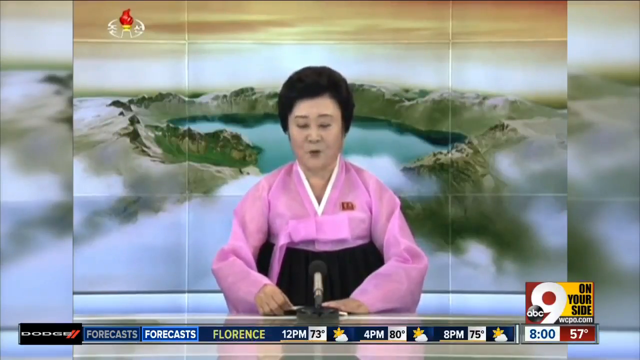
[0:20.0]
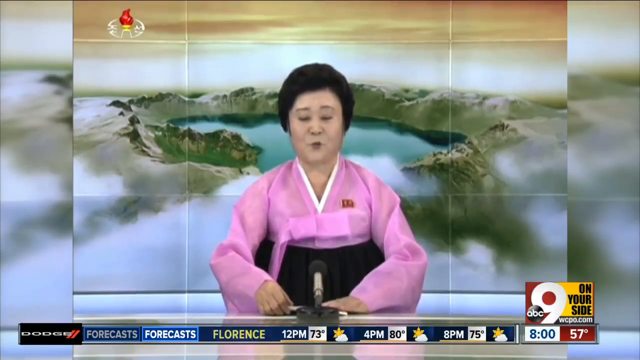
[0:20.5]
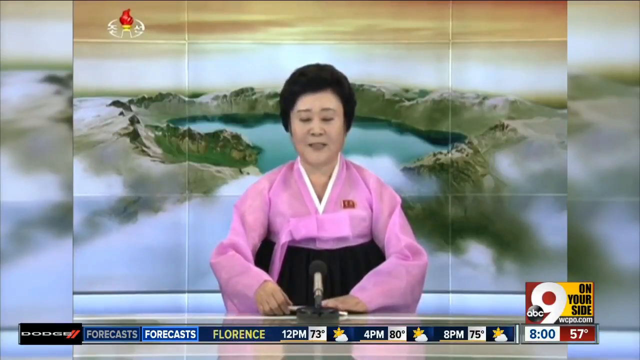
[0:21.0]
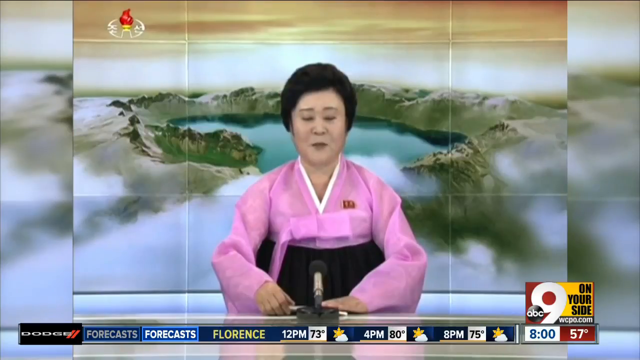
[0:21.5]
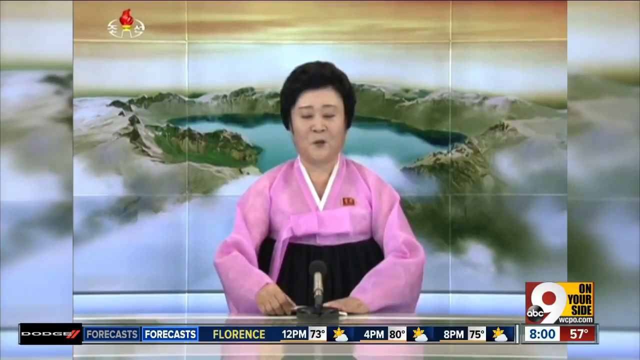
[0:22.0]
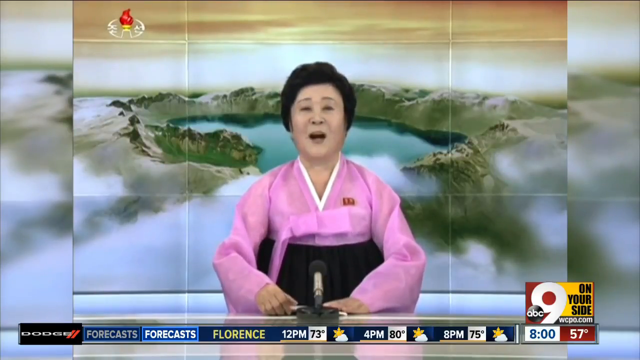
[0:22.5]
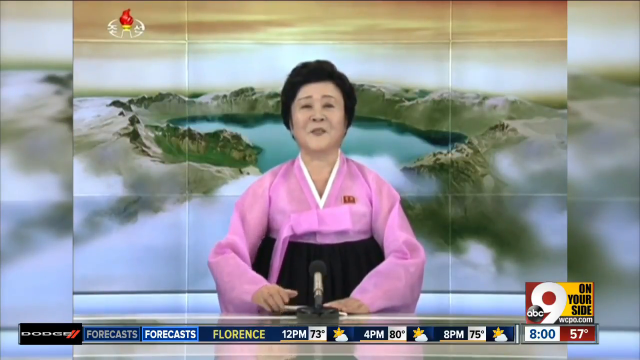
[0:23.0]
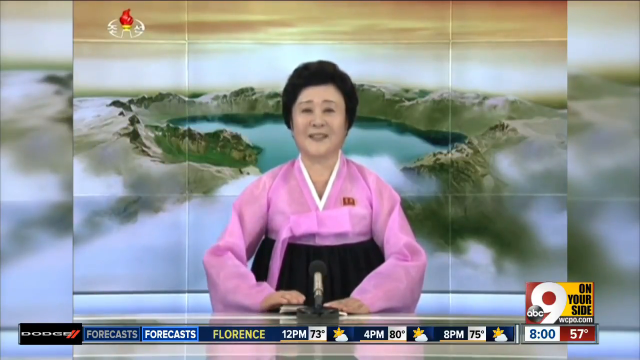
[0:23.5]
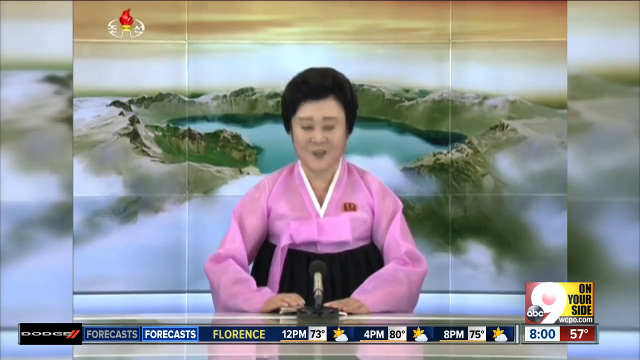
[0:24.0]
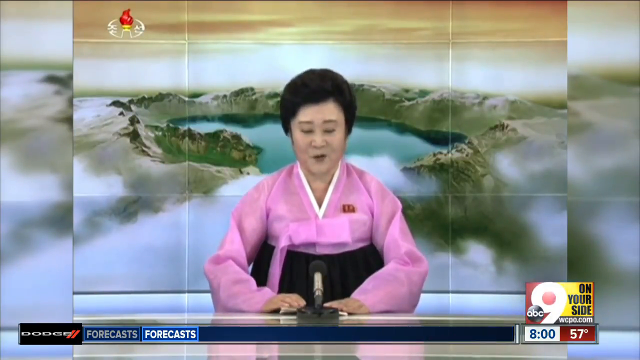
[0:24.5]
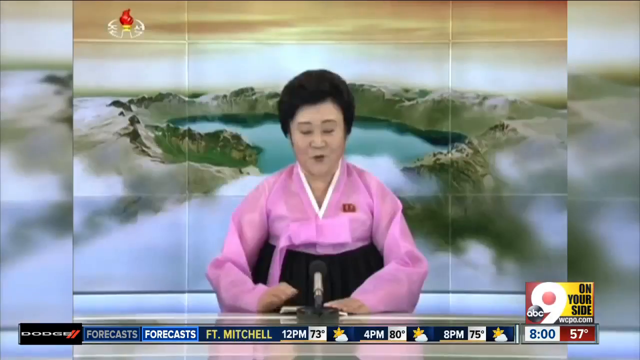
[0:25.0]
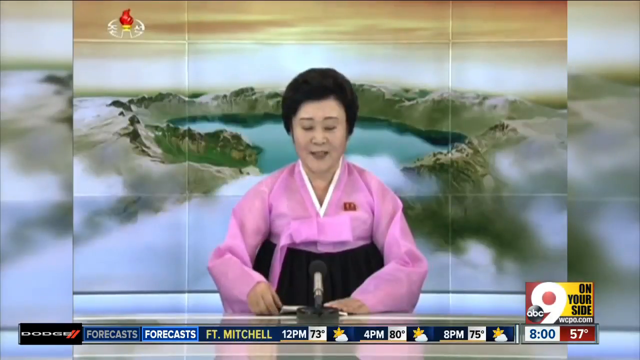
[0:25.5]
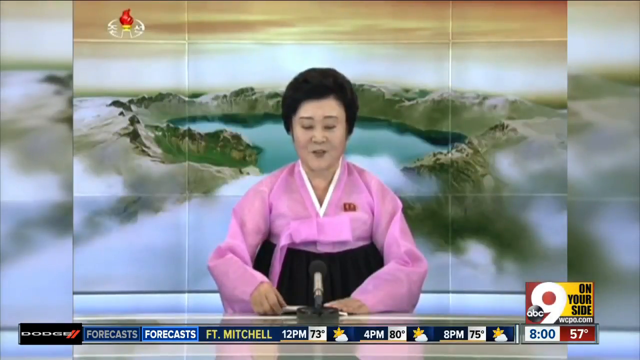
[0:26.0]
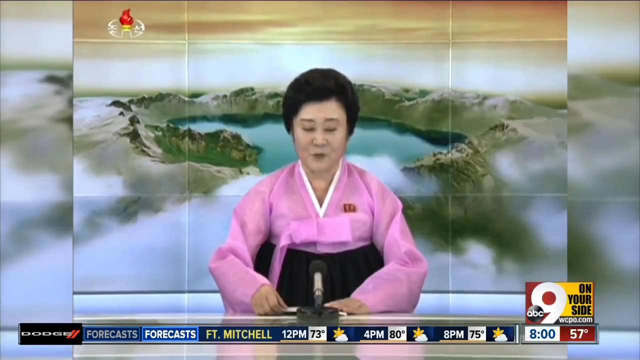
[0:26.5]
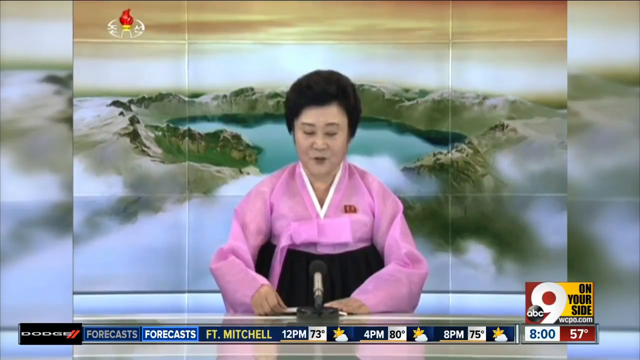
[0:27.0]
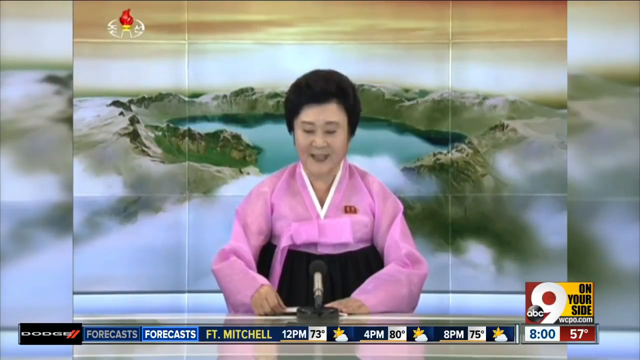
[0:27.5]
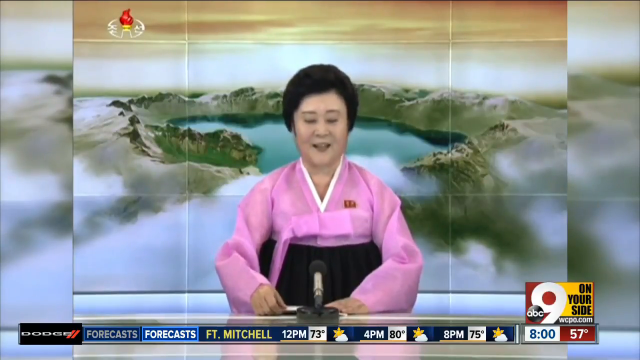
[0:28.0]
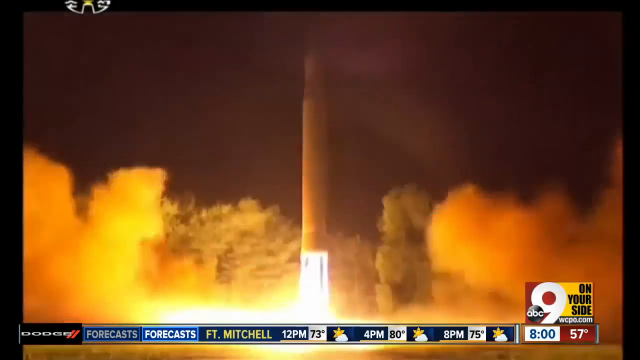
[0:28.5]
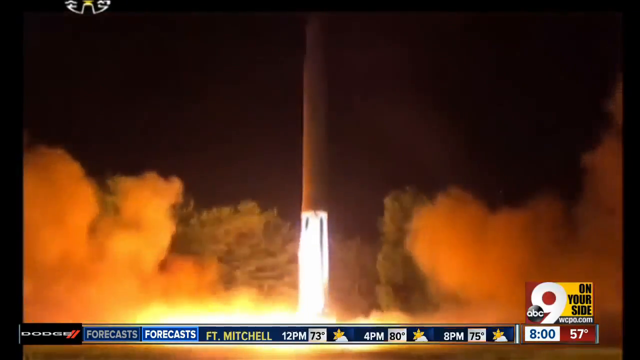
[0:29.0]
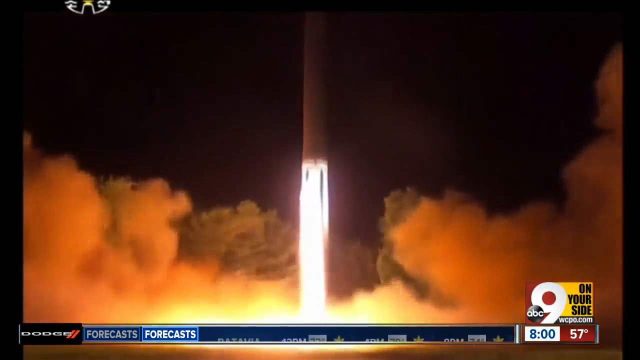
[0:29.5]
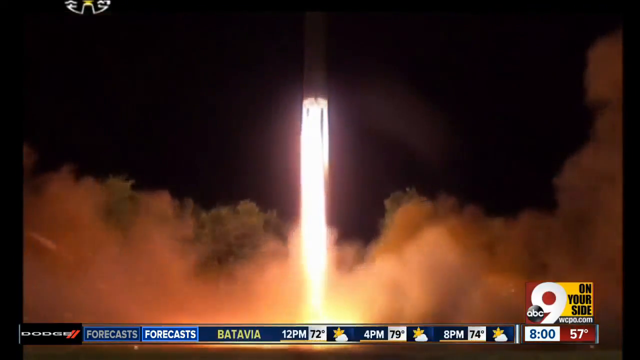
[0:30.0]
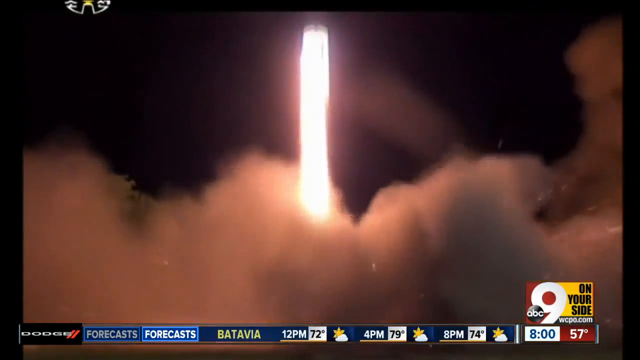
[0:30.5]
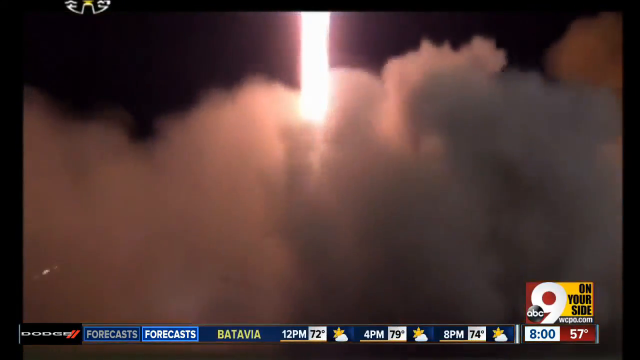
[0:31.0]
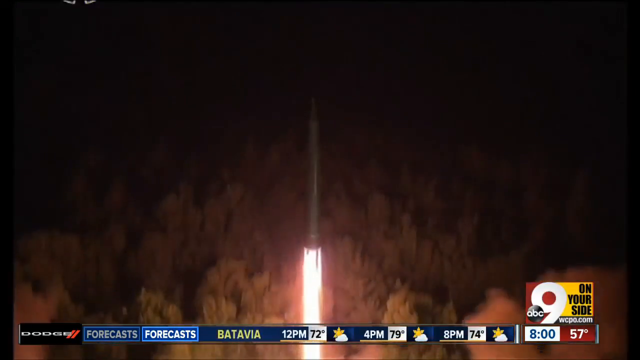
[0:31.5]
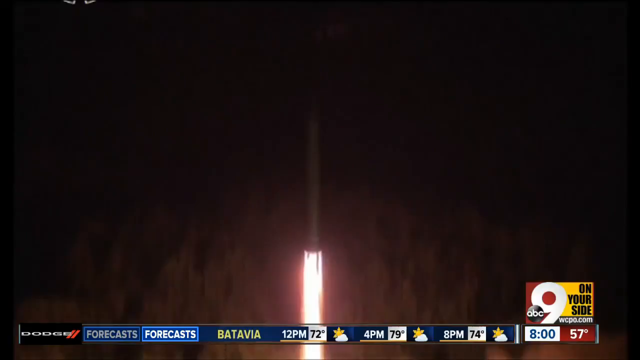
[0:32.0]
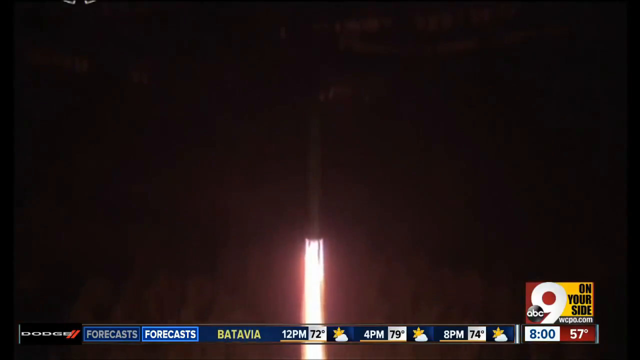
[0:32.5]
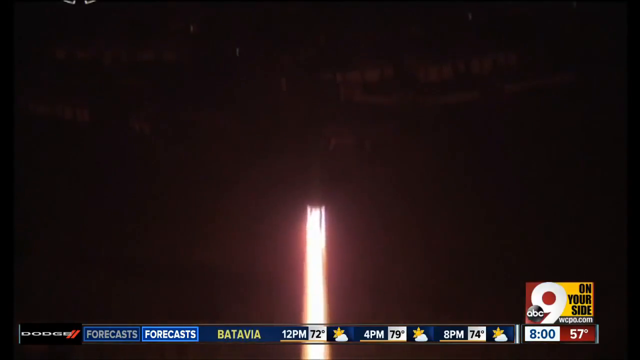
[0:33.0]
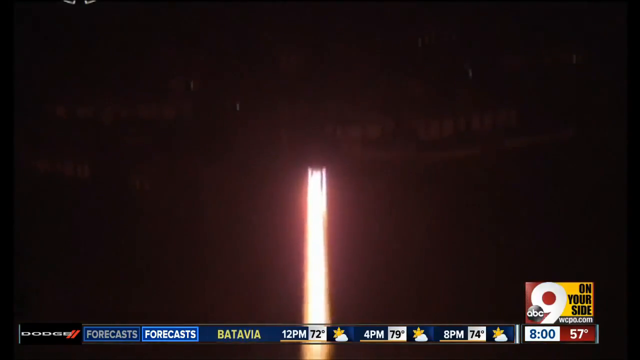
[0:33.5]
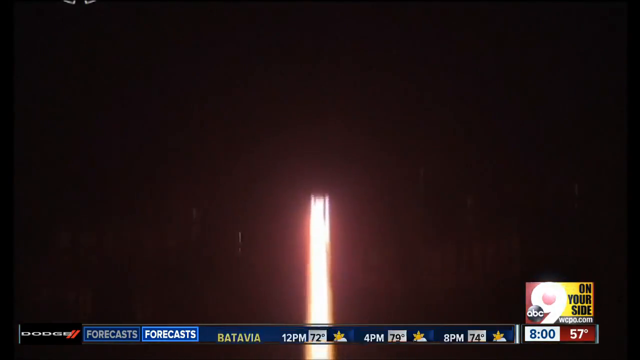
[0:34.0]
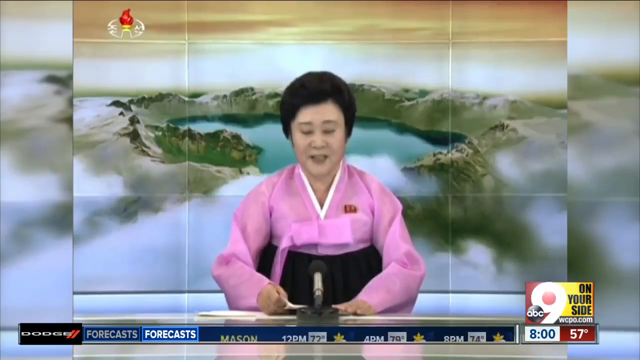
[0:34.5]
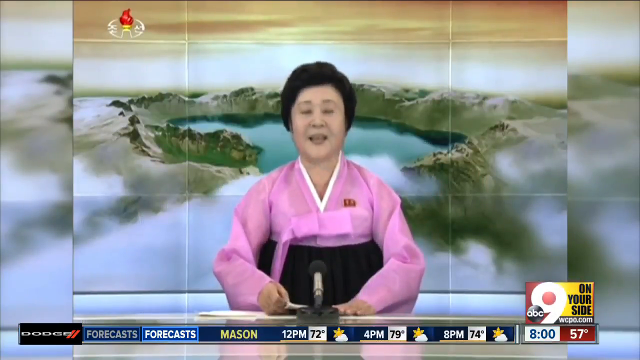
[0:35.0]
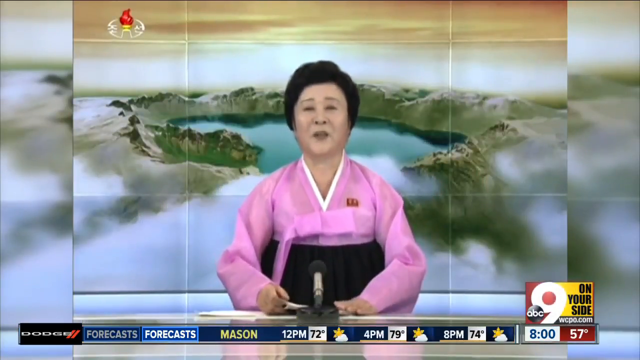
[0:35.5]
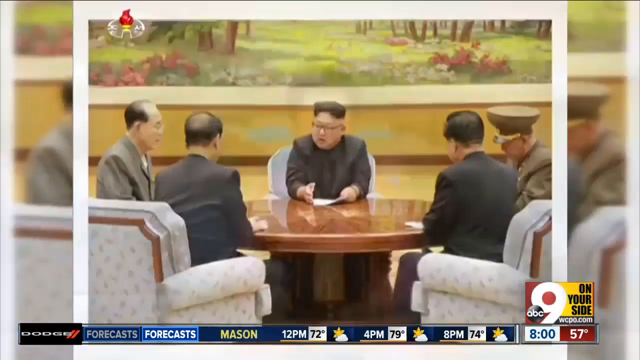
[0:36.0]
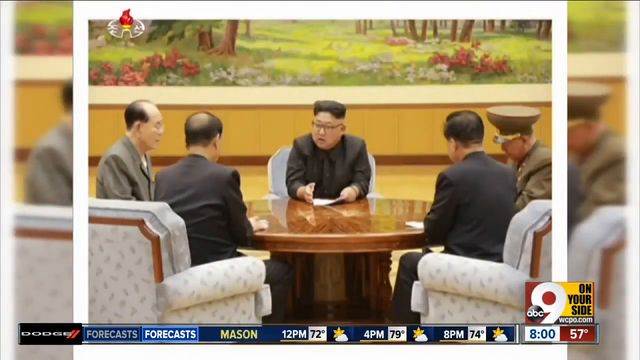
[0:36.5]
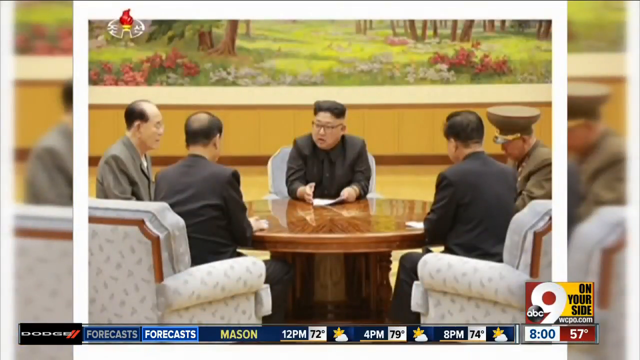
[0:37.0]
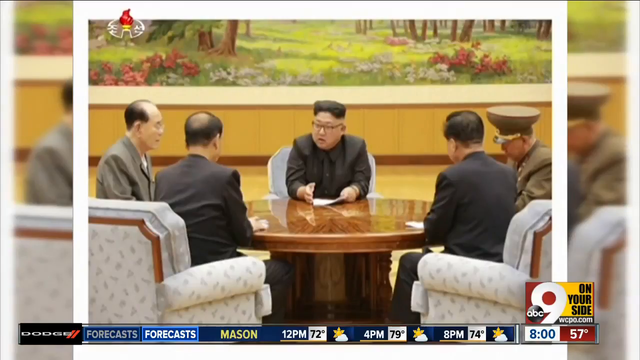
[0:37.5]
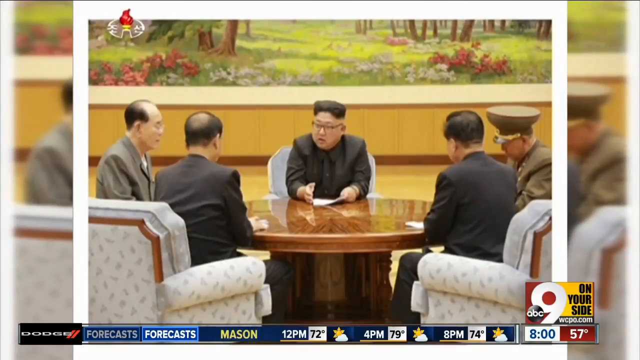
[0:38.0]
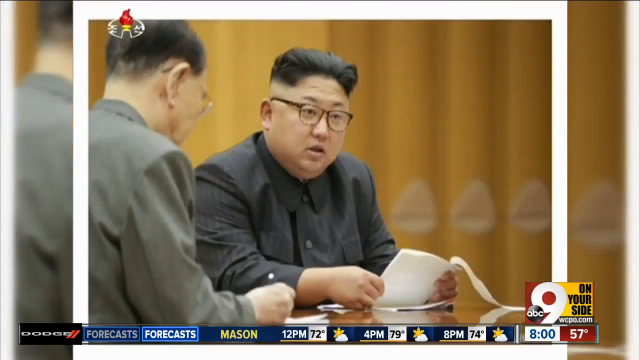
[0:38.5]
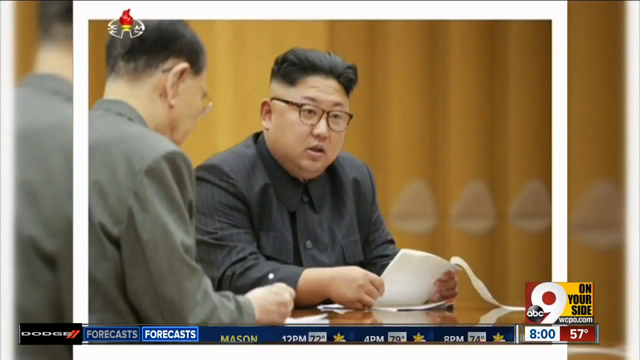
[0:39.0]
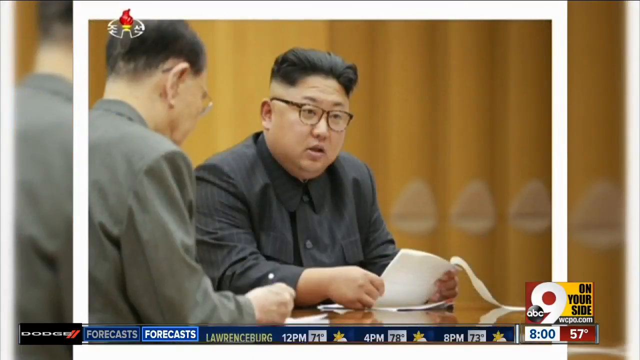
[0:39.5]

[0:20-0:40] A woman with black hair, wearing a pink robe with what looks like a very large black belt around her waist, is seated at a desk. Both of her hands rest palms down on the table in front of her, and a microphone is directly in front of her, just barely waist high on her. Behind her is a photograph of what looks like a crater or a lake inside a crater. She appears to be looking down at a piece of paper, or maybe a small booklet, in front of her, seemingly holding it with her right hand with her left hand on top of it. She looks down and speaks, then looks up and directly into the camera. She lifts her hand ever so slightly, then drops her right hand back on the booklet as she nods her head downward.